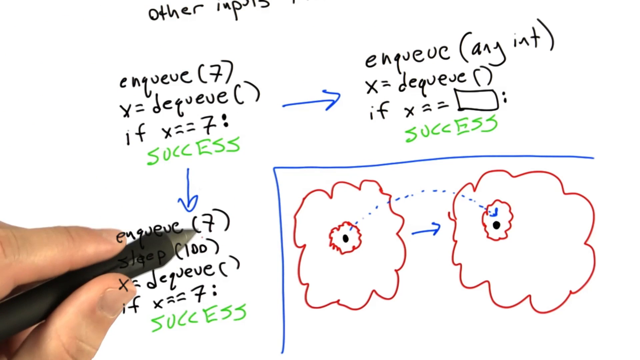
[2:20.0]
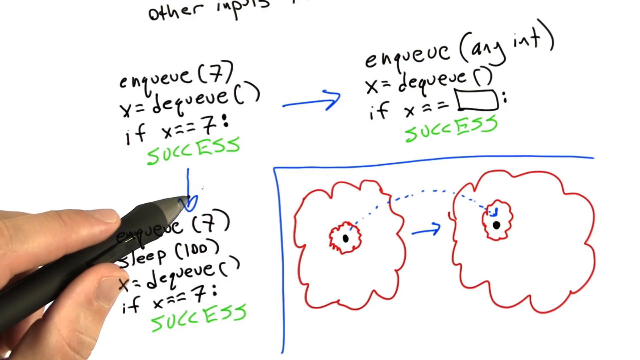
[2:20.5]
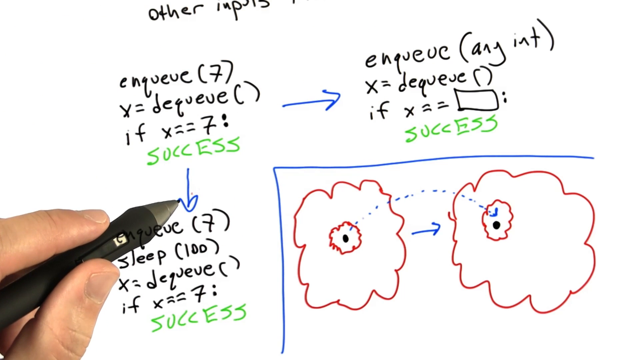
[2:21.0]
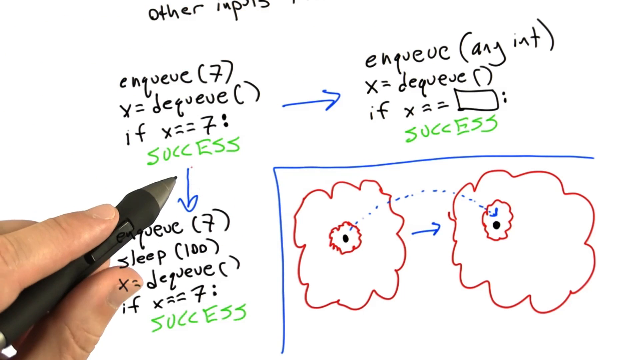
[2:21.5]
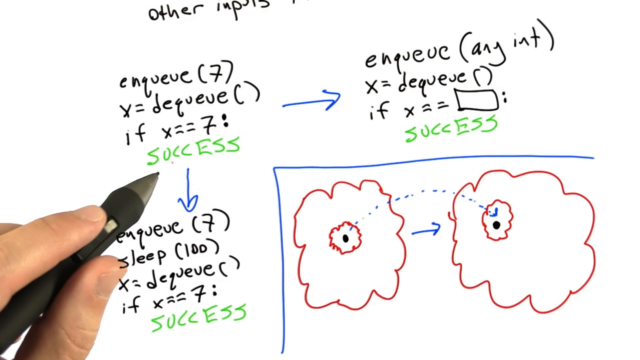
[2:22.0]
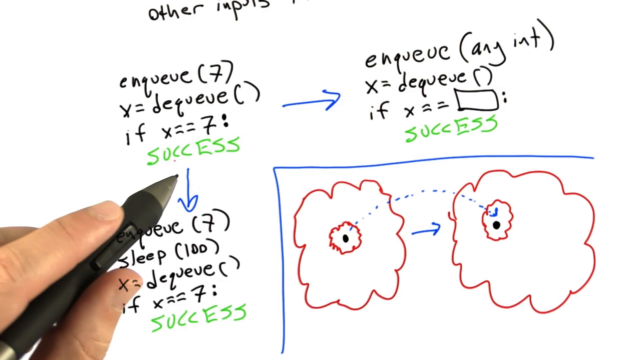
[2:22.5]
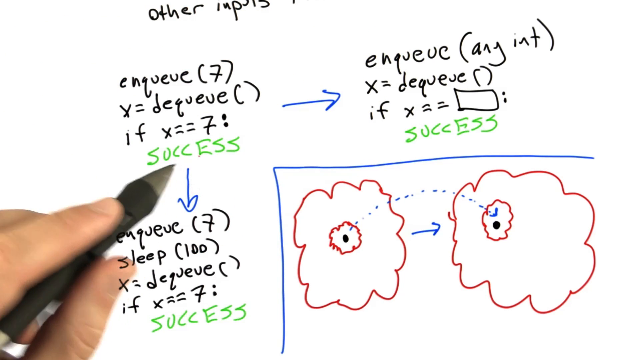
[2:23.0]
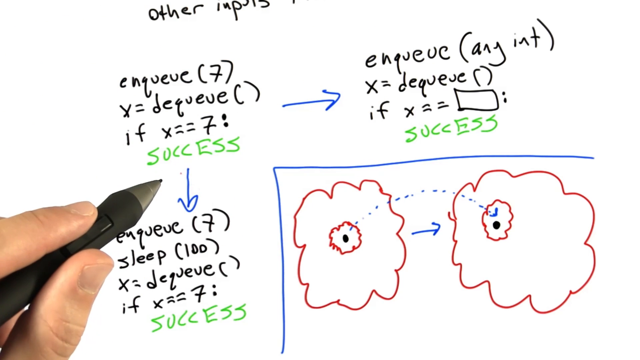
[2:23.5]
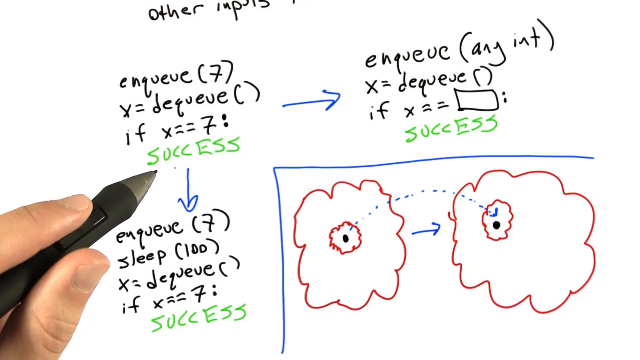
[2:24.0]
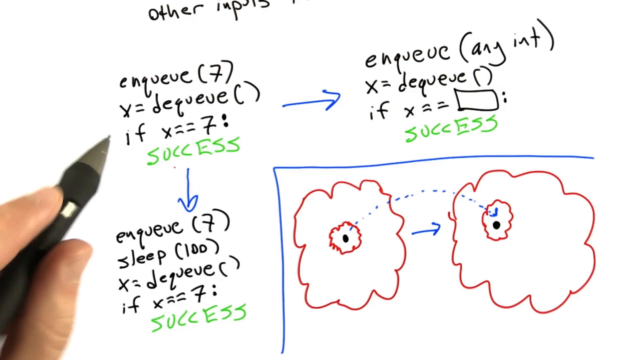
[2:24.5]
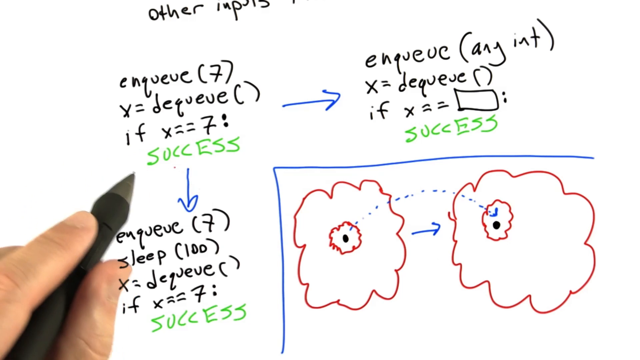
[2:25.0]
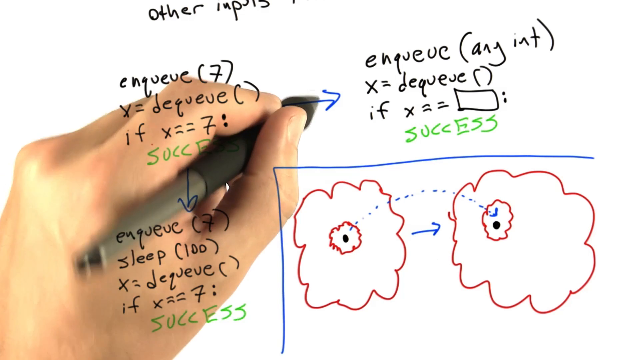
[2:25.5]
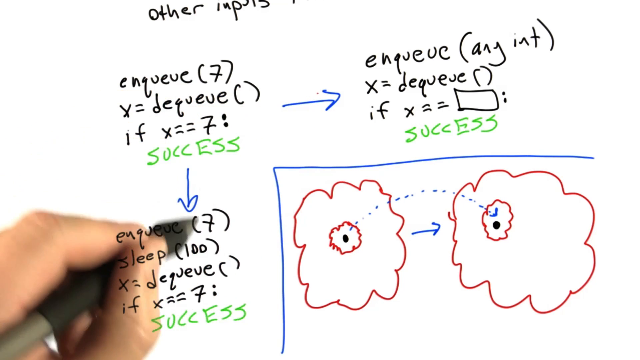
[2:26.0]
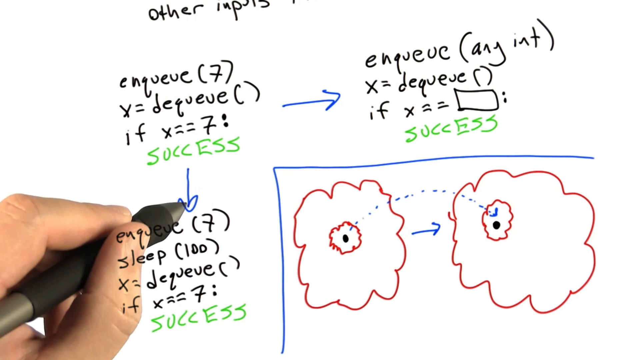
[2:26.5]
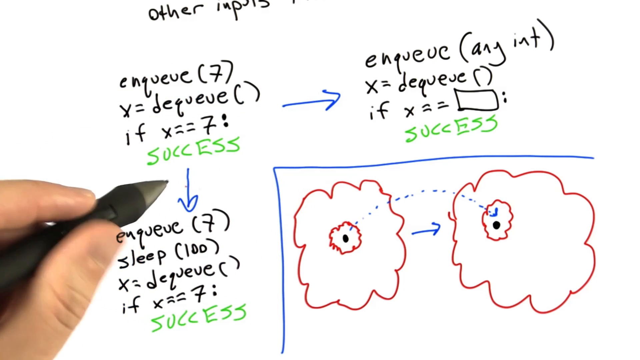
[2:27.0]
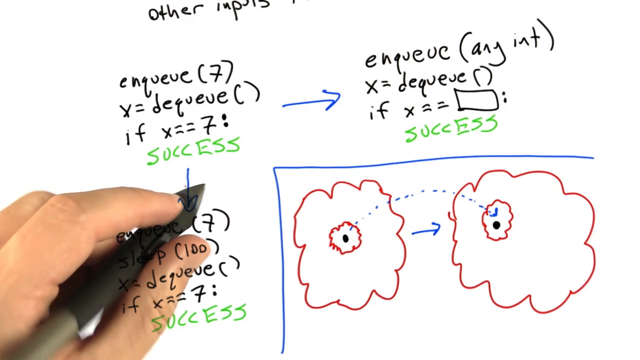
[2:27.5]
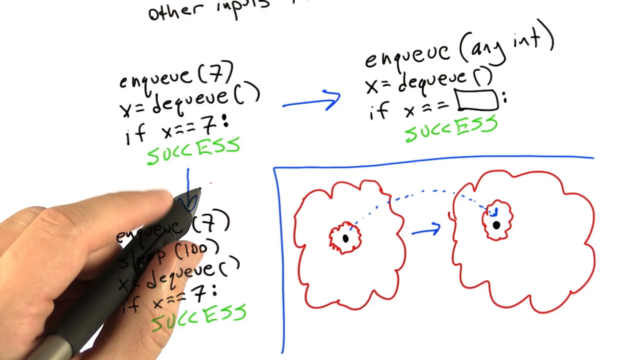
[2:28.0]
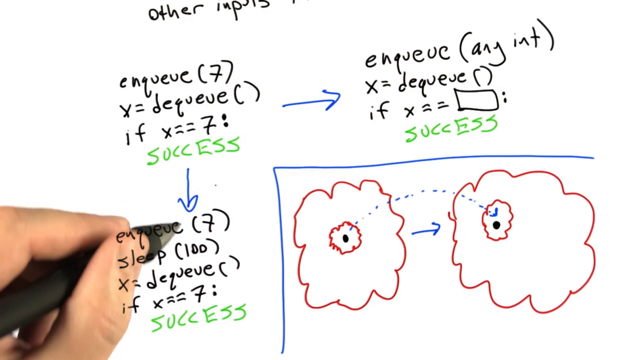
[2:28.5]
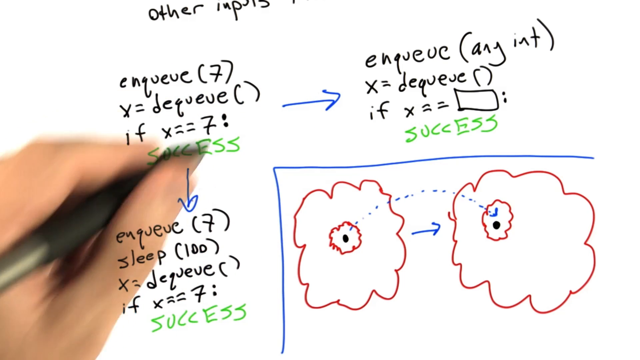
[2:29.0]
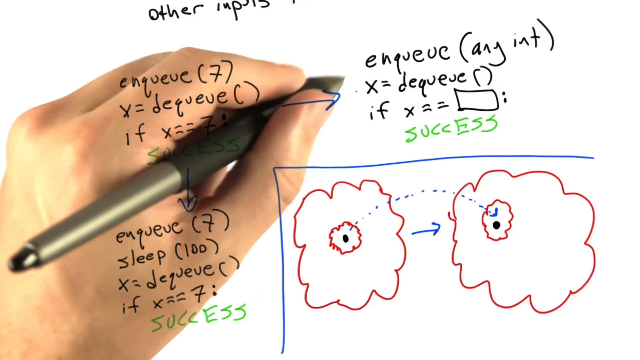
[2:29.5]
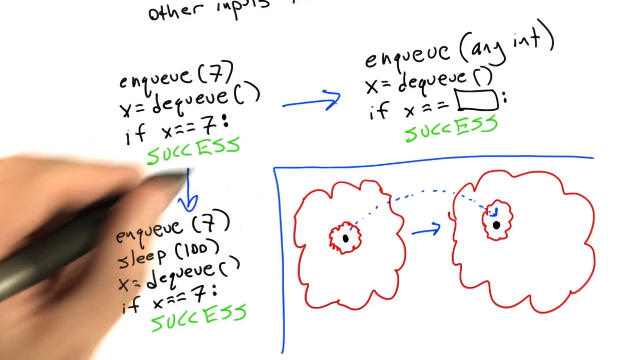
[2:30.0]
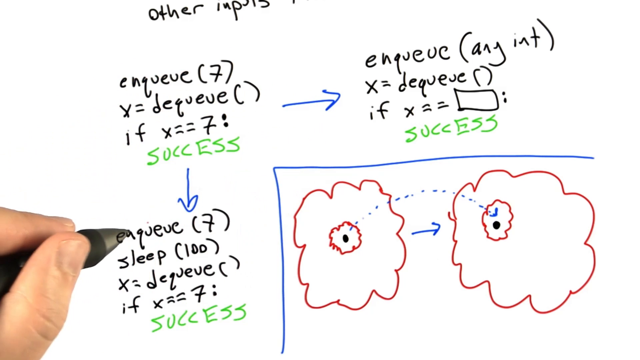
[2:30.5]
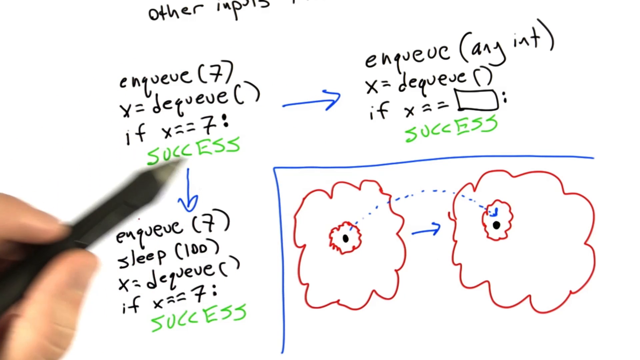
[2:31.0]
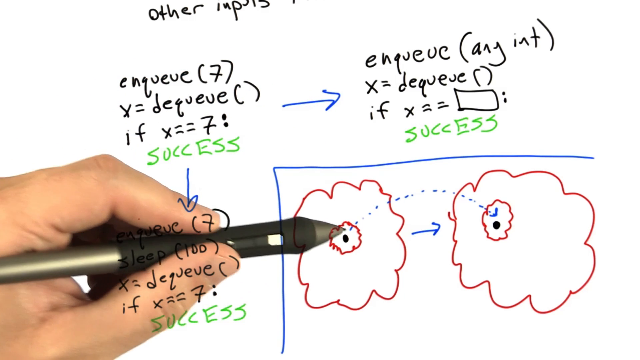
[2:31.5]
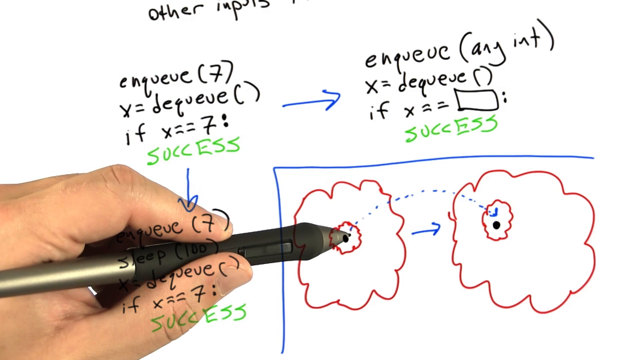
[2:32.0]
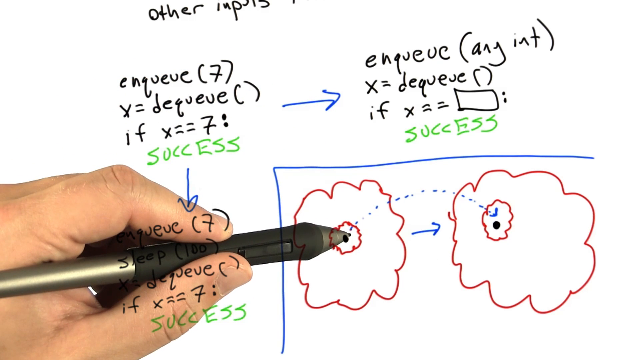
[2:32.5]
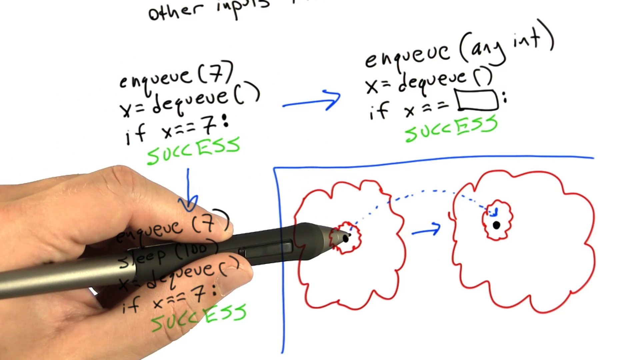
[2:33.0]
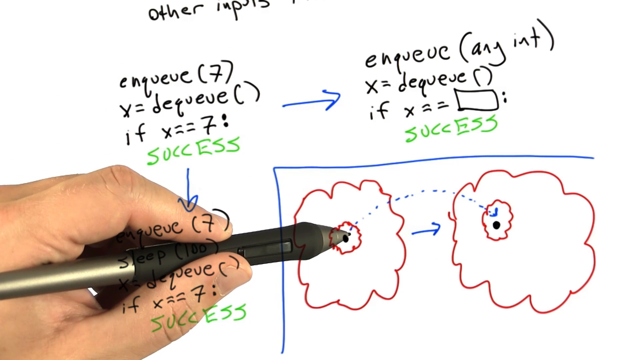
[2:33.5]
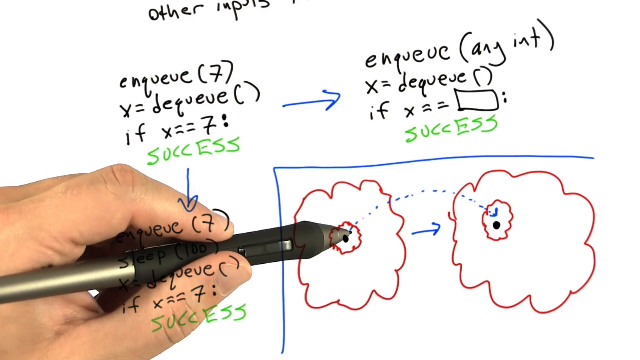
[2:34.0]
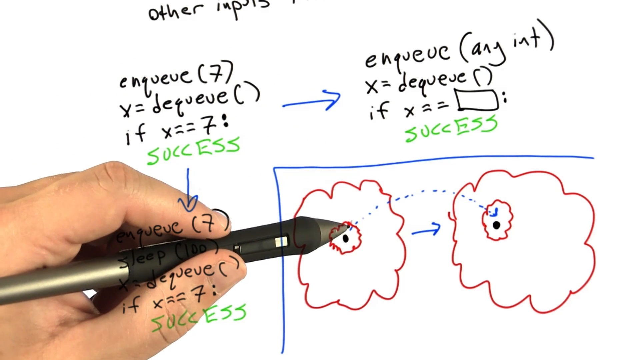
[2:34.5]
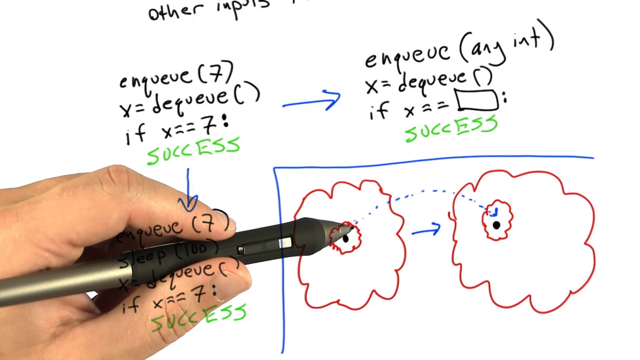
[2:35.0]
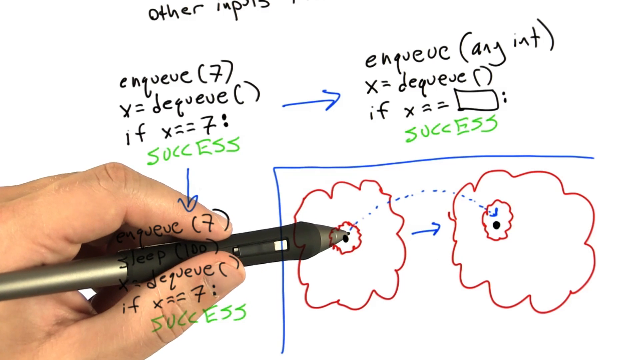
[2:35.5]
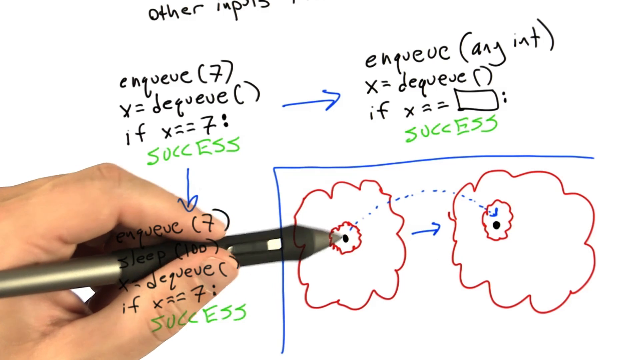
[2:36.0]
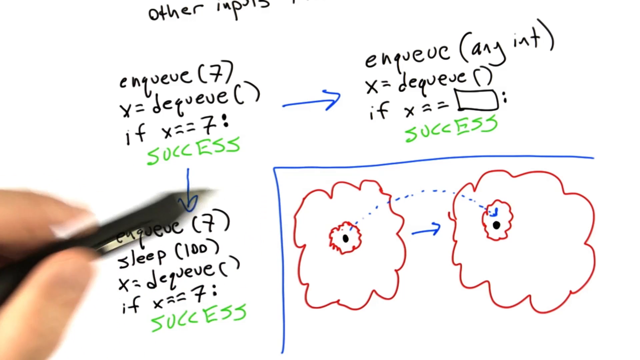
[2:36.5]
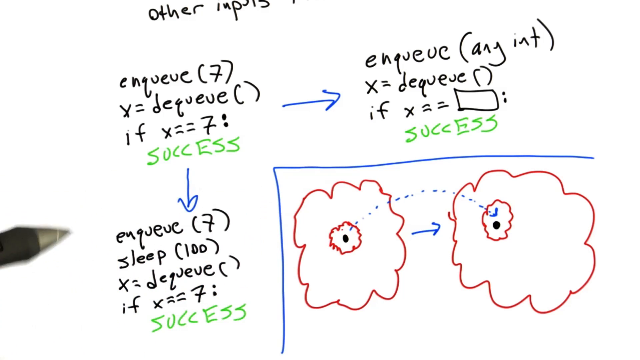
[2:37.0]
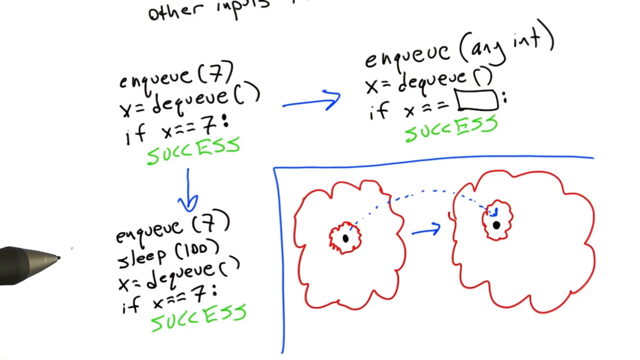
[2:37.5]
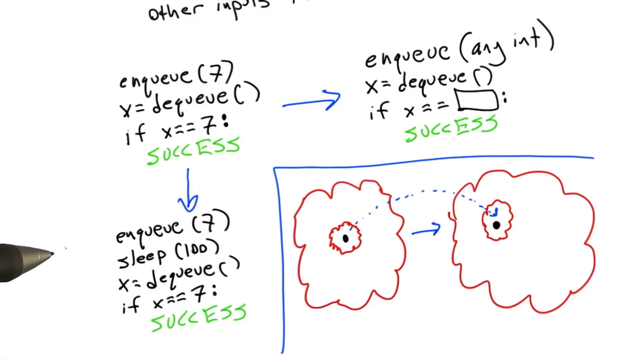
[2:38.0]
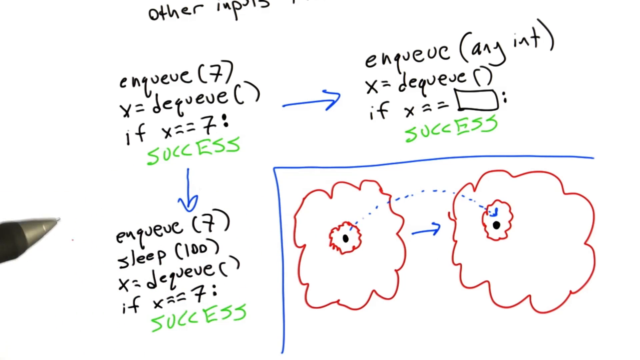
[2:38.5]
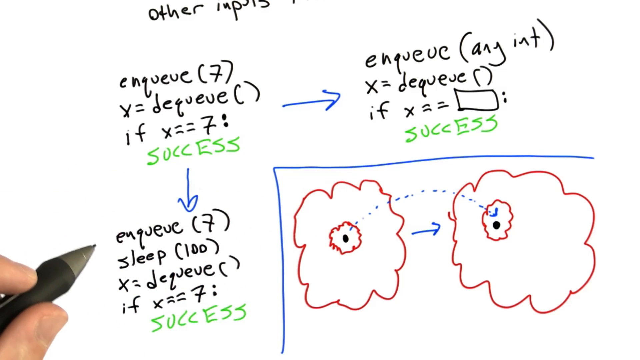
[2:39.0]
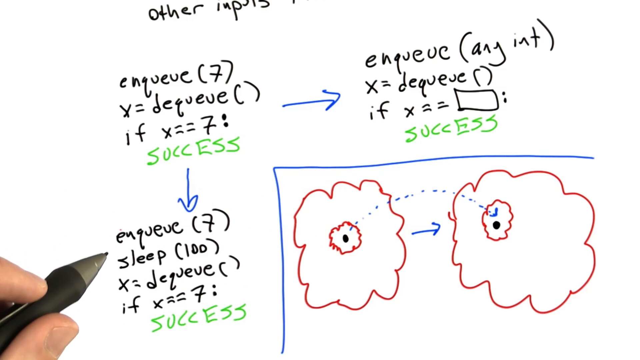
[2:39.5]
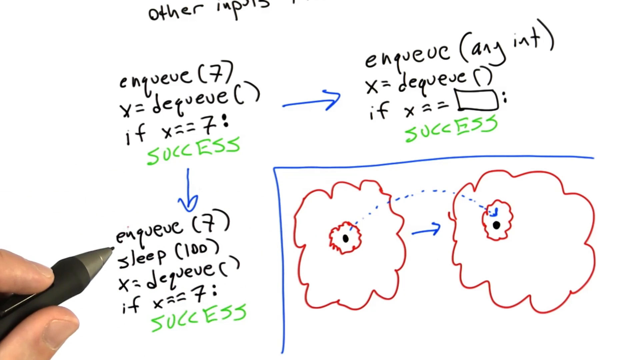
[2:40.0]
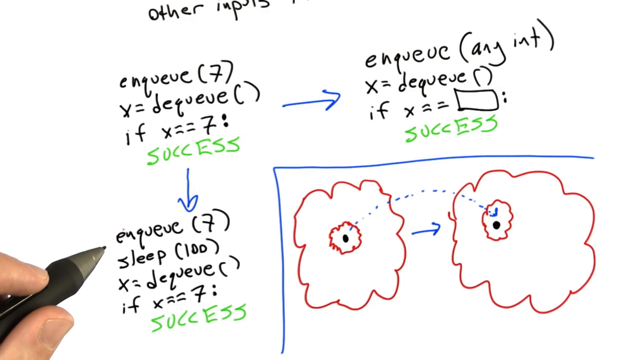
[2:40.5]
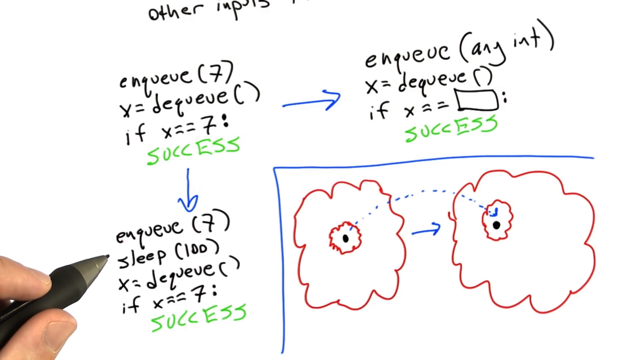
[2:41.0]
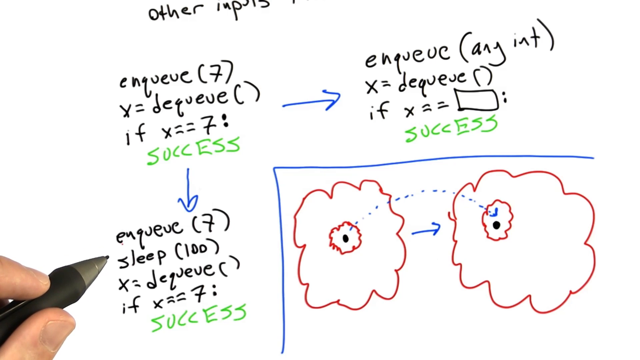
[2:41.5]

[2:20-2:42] The hand is at the bottom equation again, pointing at the arrow that separates the two. It moves to the arrow at the top separating the first two equations, then quickly back to the arrow separating the first equation from the bottom equation. The hand hovers around this arrow, moves back to the top arrow, and then back to that arrow again. The hand then points with the pen at the dot in the first pink cloud, the pen positioned there as if something else is being explained. The hand moves across the bottom equation to its left-hand side, and only the pen is visible again as it stands still. The pen moves closer to the bottom equation and points out its top word, which is unreadable, then stops on the number 7.